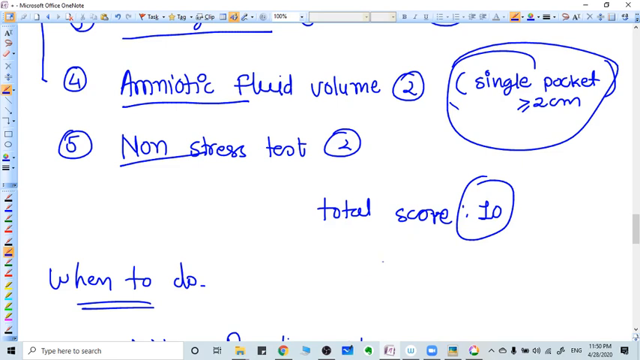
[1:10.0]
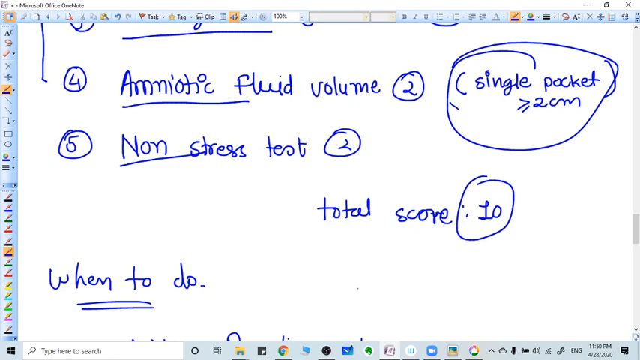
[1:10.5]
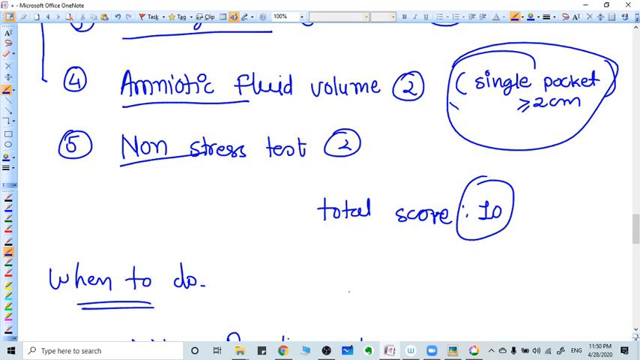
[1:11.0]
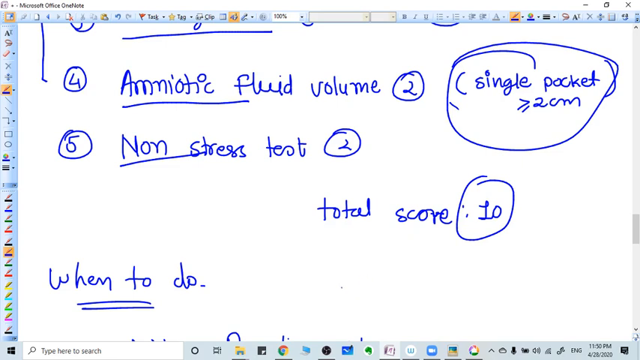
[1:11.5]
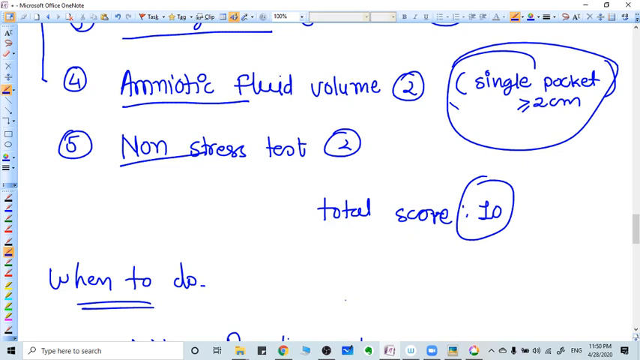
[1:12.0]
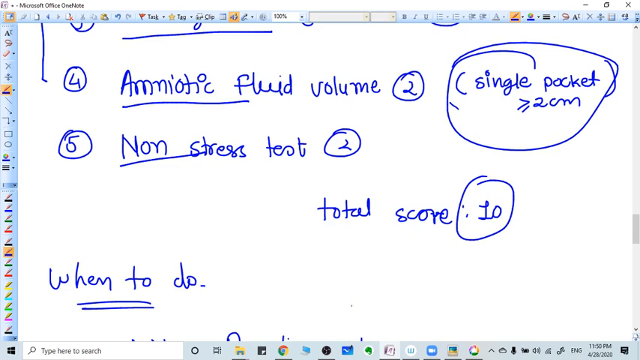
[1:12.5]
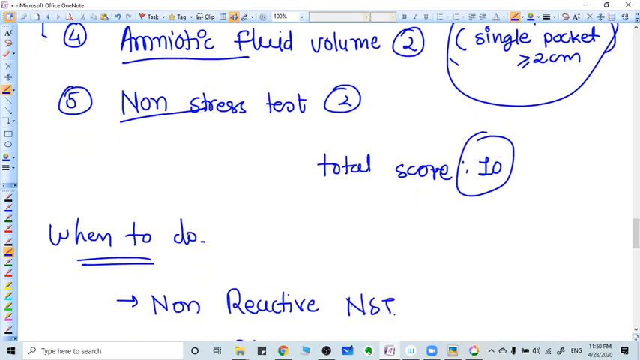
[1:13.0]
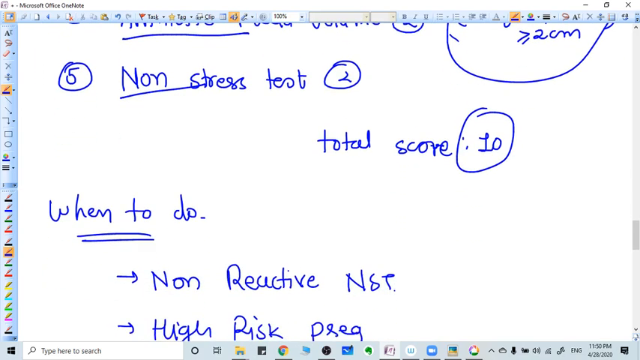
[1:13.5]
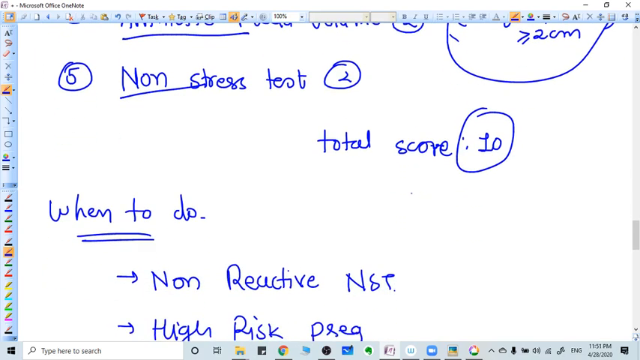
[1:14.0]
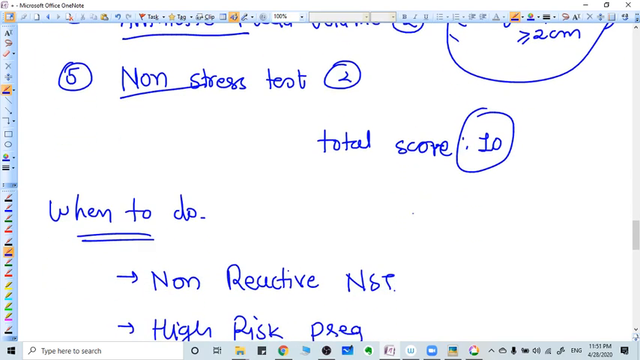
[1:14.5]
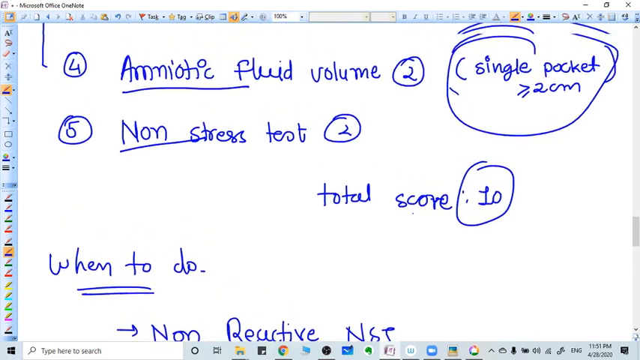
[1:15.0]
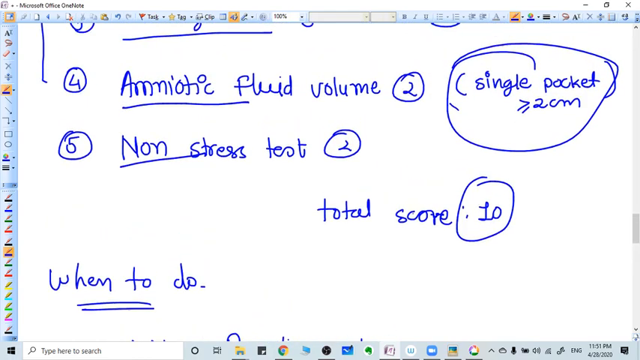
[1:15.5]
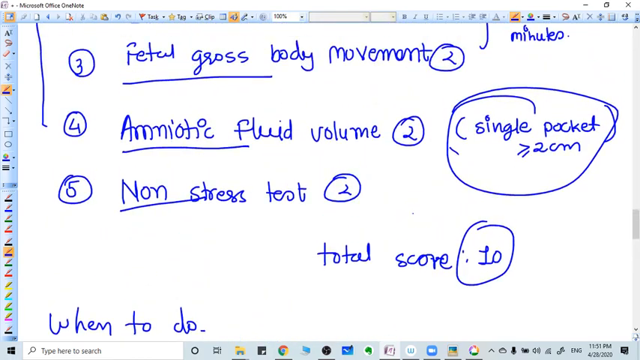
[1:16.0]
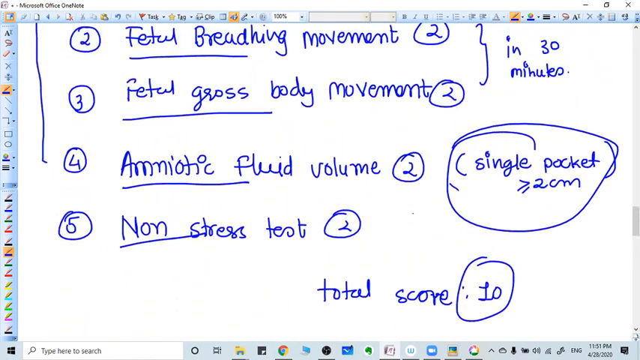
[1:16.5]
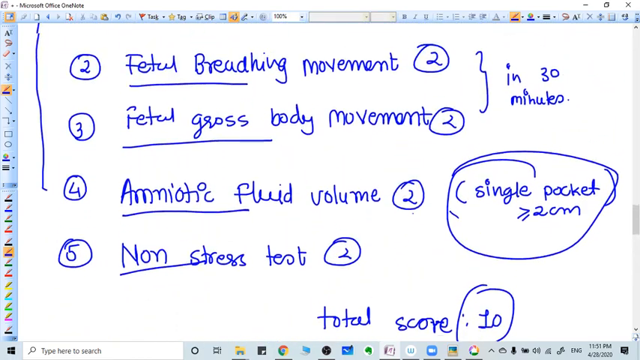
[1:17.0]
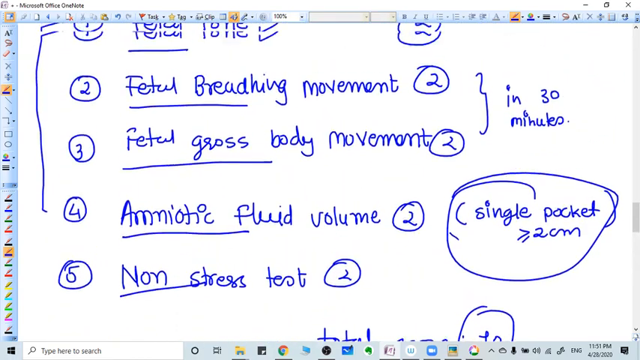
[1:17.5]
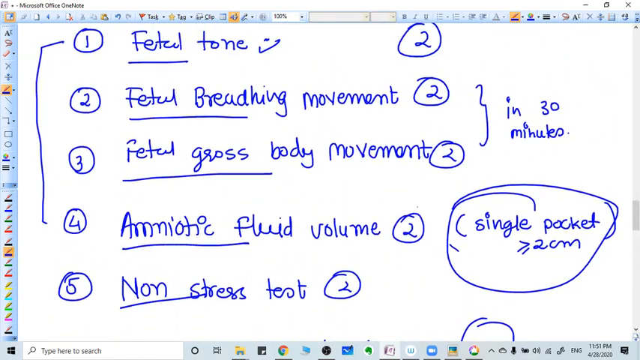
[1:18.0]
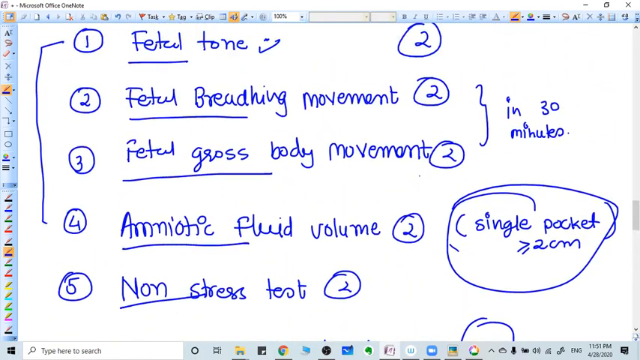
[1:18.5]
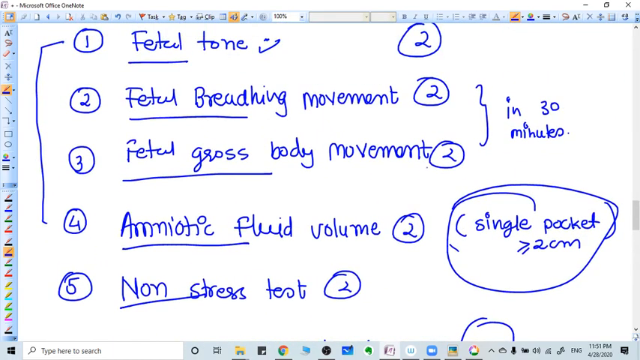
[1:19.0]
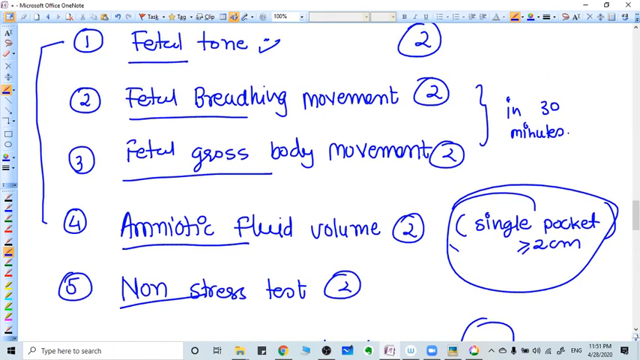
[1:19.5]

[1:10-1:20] The screen shows numbers 4 and 5 on the Microsoft Office OneNote page. The view scrolls down a little to the "when to do" section. Under "when to do" it says "non reactive NST," and underneath that it says high-risk pregnancy, with pregnancy abbreviated as "PRG." There is an arrow to the left of each of these lines. The view then slowly scrolls back up and stops.